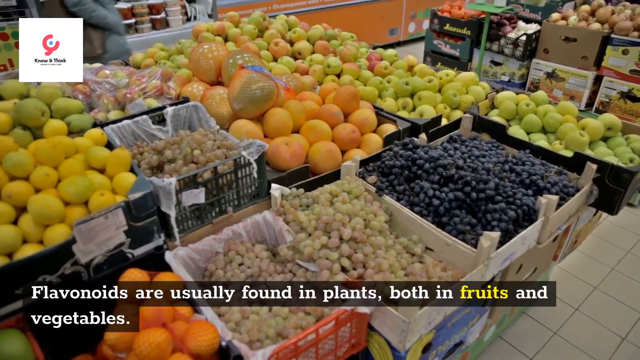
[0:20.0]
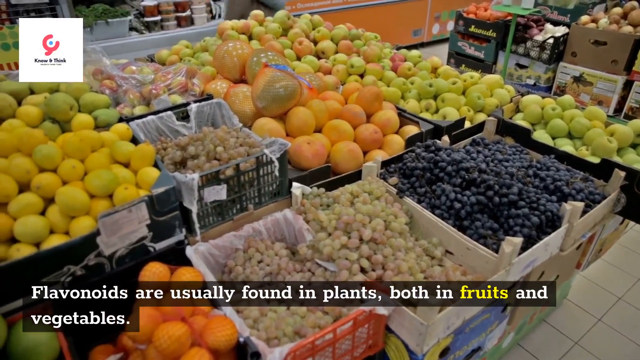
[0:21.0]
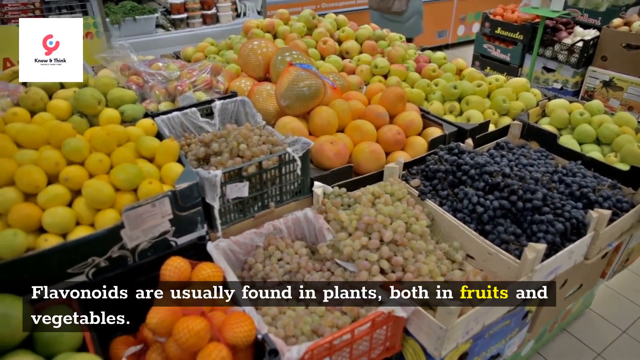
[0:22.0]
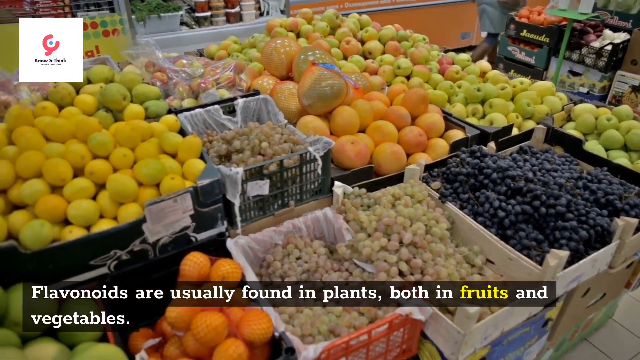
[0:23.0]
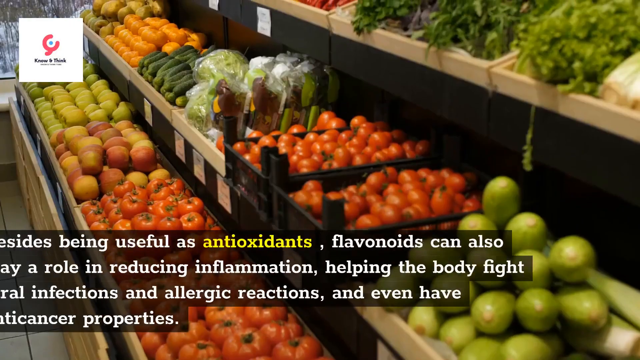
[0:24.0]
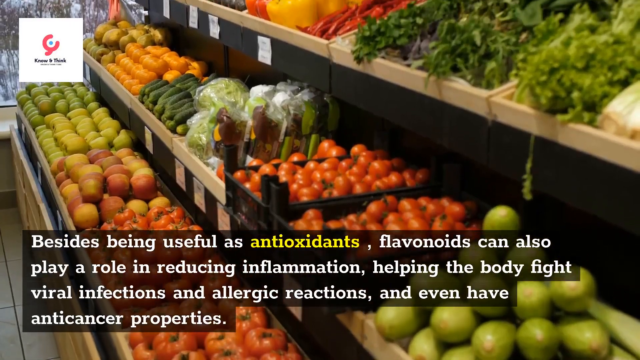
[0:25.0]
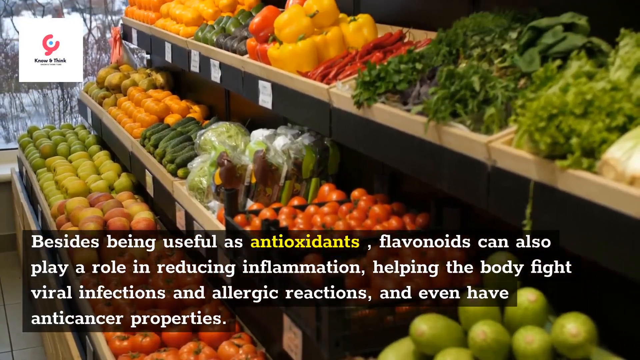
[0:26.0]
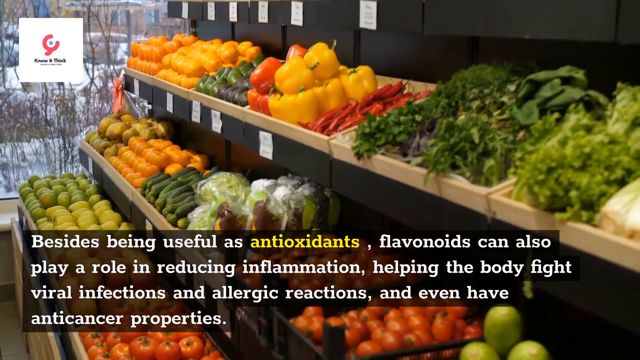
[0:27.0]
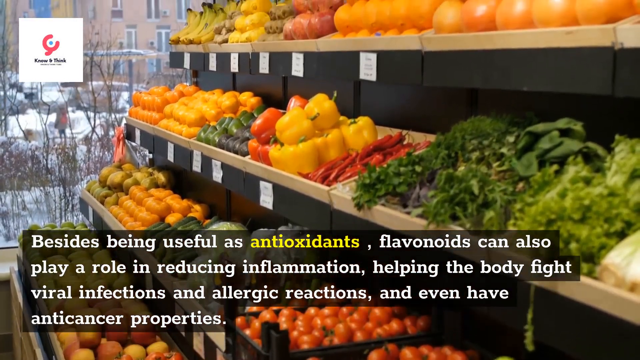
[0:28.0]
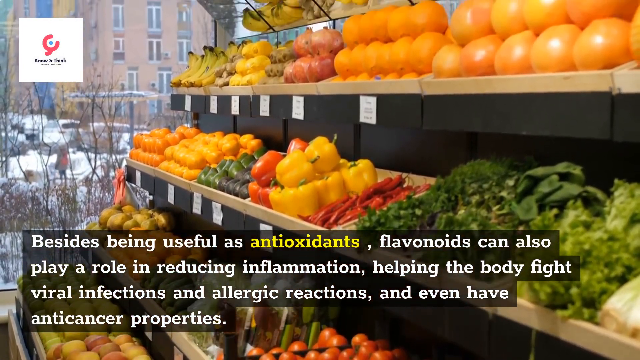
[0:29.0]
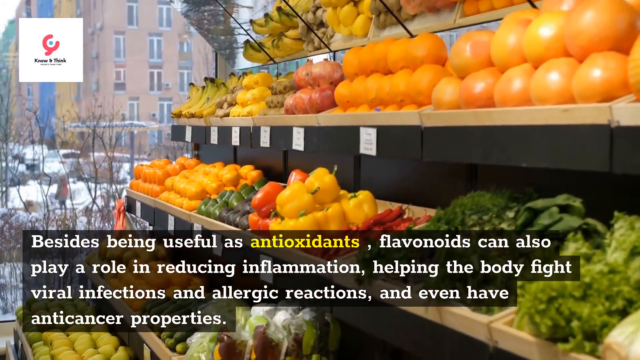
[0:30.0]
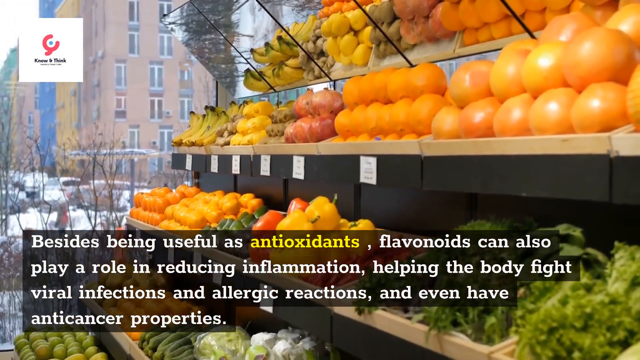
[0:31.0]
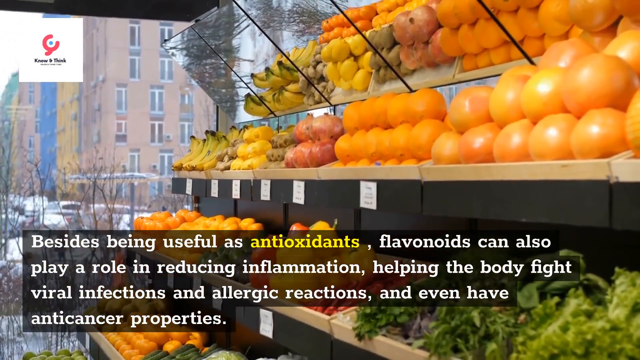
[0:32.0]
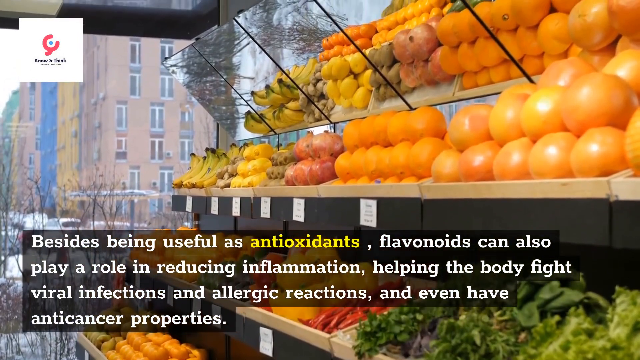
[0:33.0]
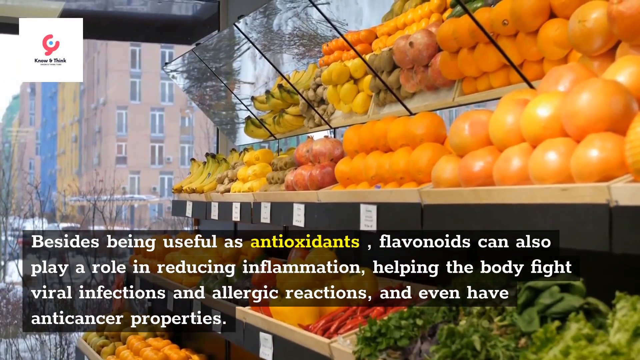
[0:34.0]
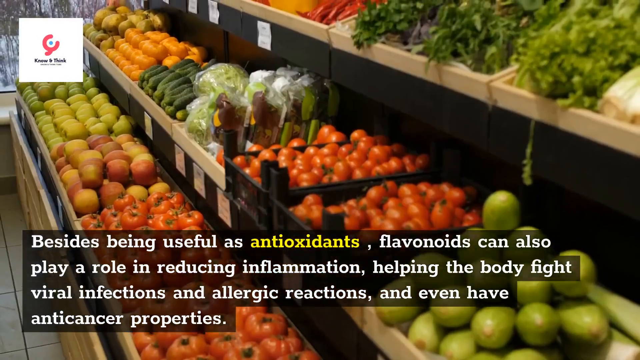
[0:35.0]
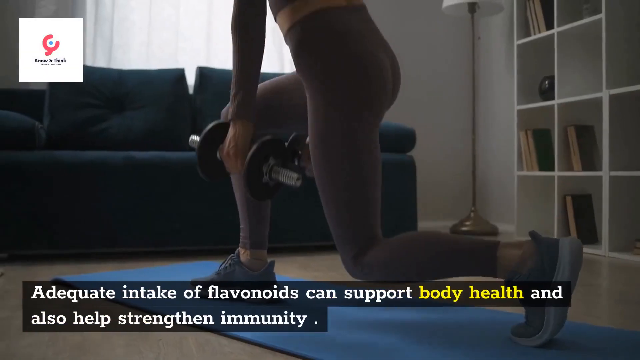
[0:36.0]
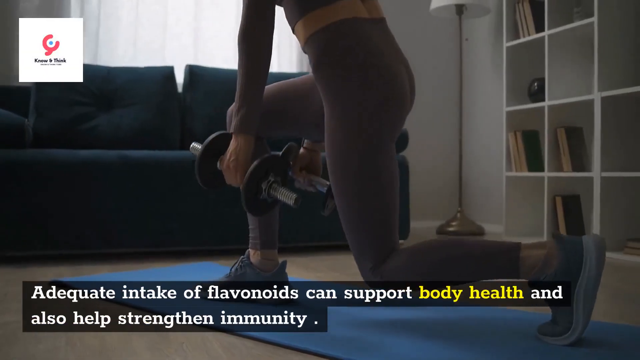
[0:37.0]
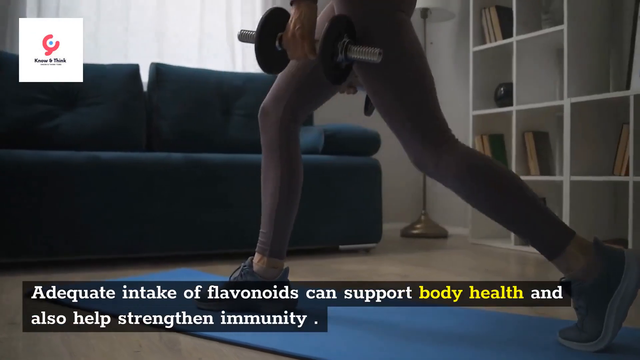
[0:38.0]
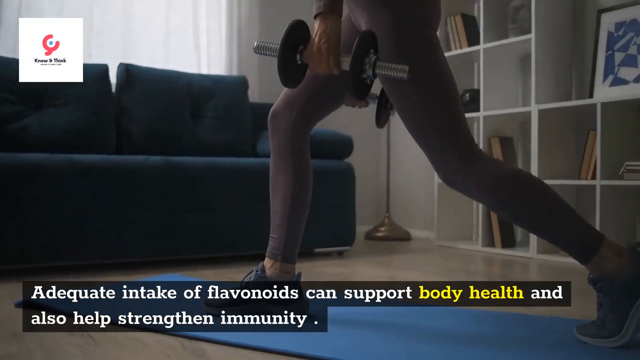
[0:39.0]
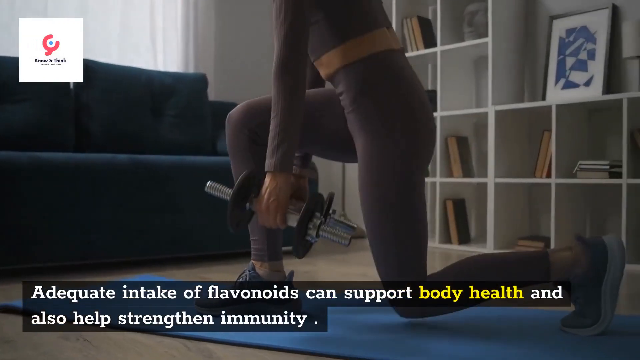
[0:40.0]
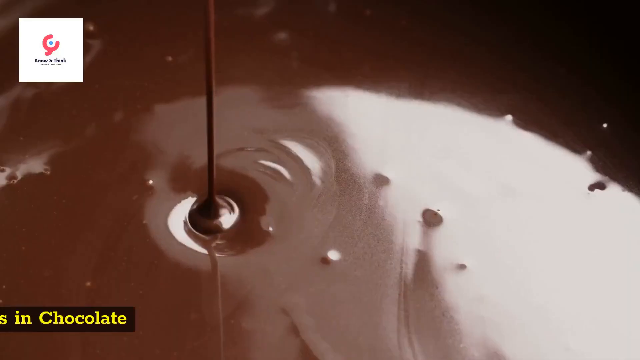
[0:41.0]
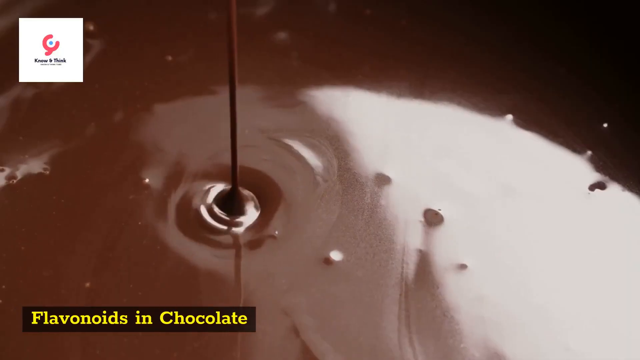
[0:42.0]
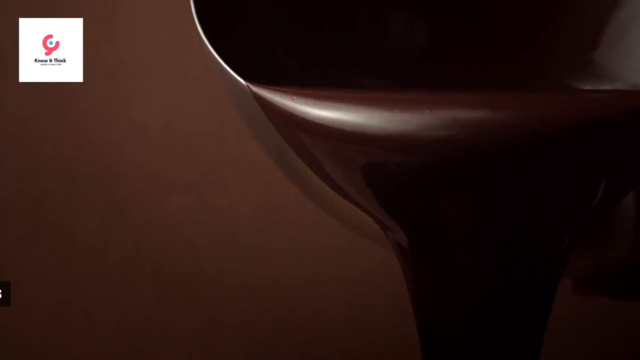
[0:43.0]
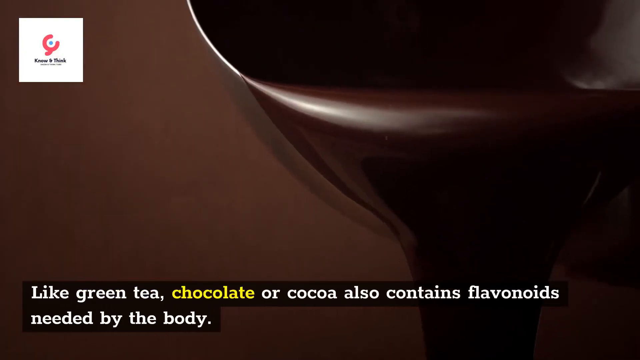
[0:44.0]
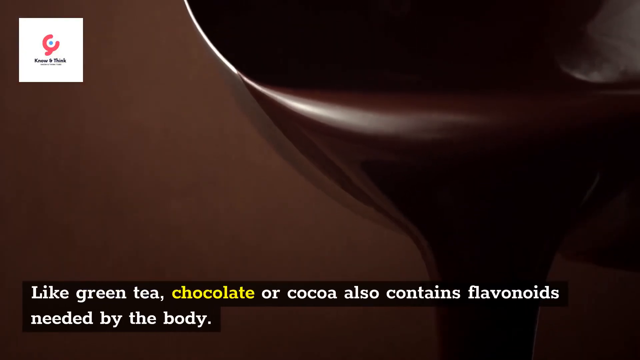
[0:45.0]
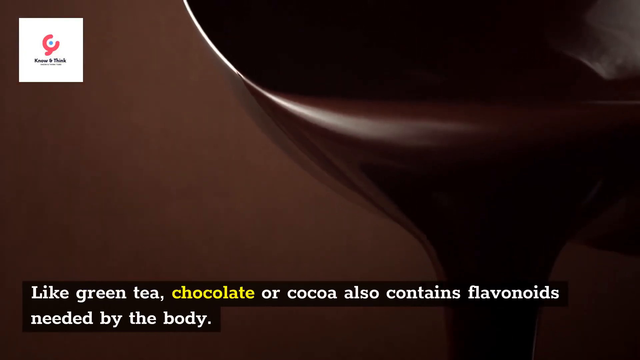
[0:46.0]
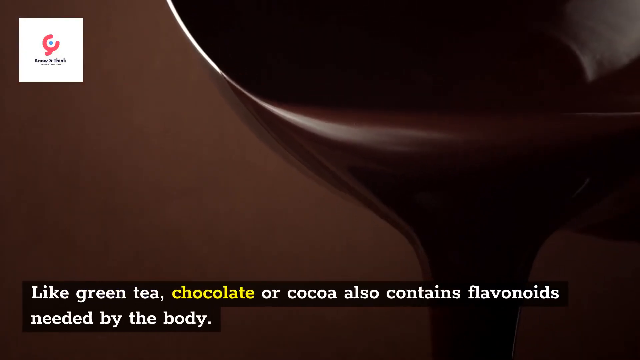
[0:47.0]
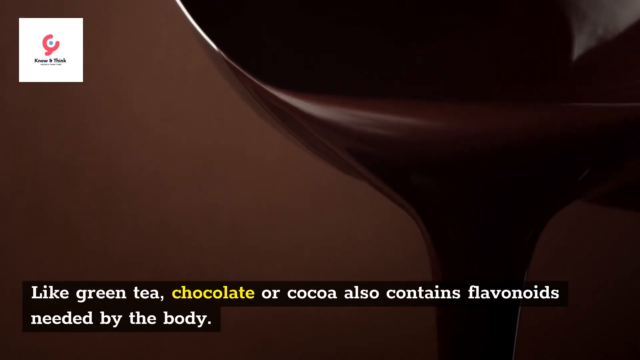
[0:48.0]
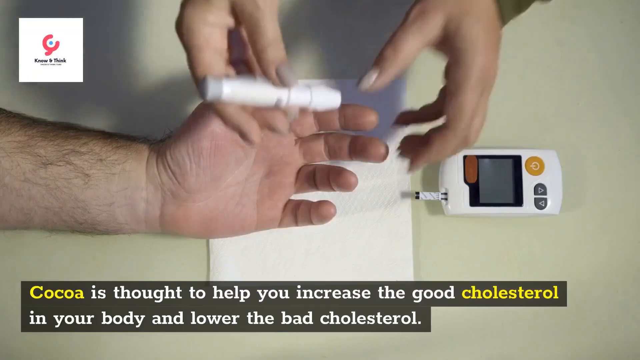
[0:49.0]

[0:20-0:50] A grocery store produce section shows different fruits and vegetables, with lemons, oranges, peaches, grapes and apples as the main fruits. An infographic at the bottom states that flavonoids are usually found in plants, both in fruits and vegetables, and people walk in the background. After a transition, another infographic states that besides being useful as antioxidants, flavonoids also play a role in reducing inflammation, helping the body fight viral infections, and so on. This infographic appears over an outdoor fruit stand with bananas, oranges, apples and other vegetables at the bottom as the camera pans up. The scene transitions to a woman working out inside a house; she looks to be doing lunges while holding a weight in one hand. Another transition shows melted chocolate being poured into a container.